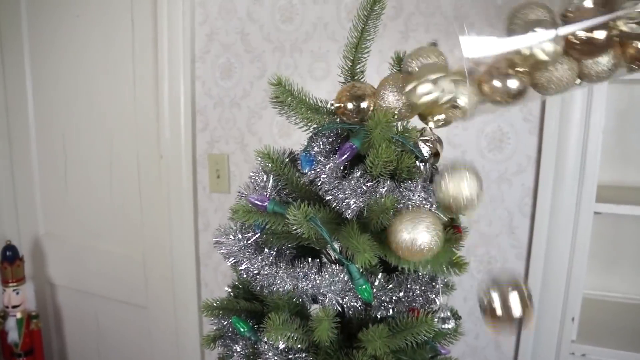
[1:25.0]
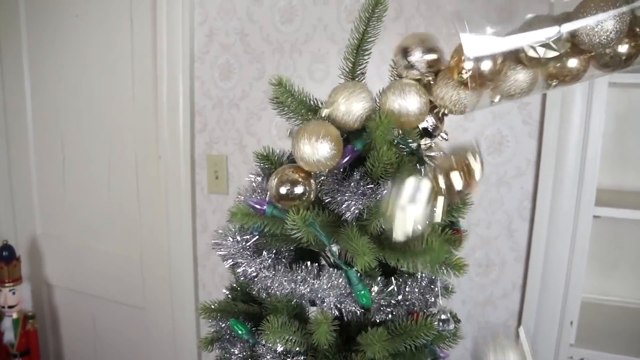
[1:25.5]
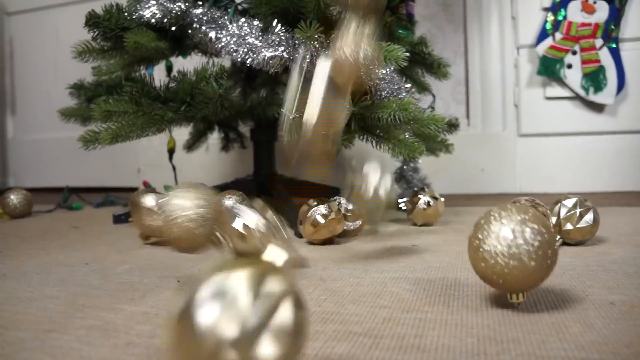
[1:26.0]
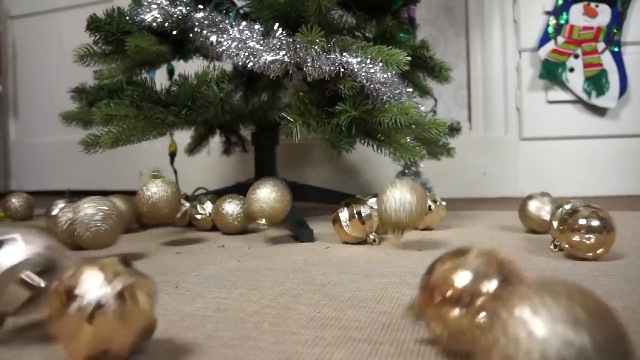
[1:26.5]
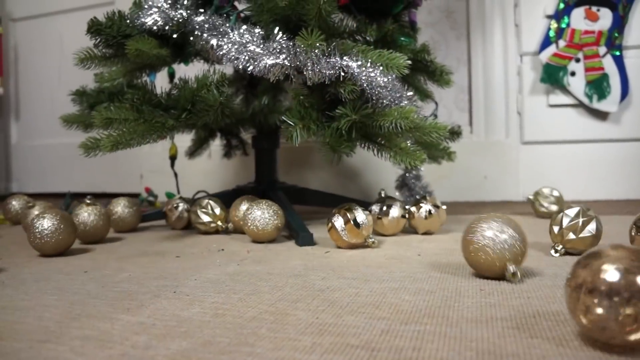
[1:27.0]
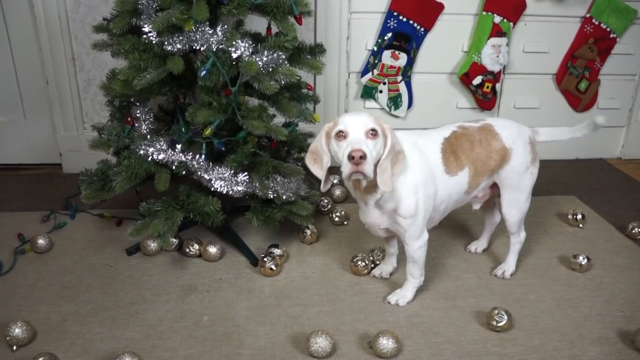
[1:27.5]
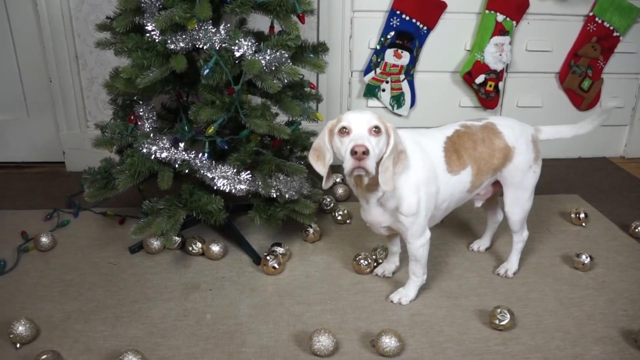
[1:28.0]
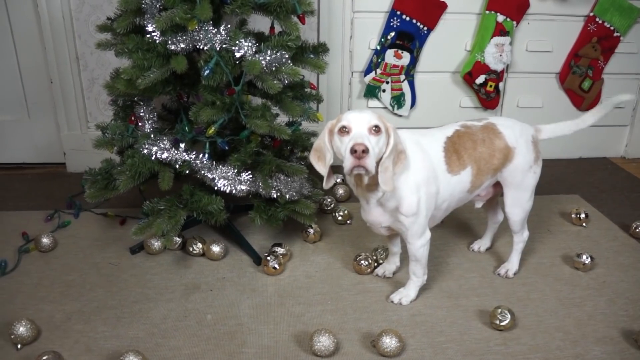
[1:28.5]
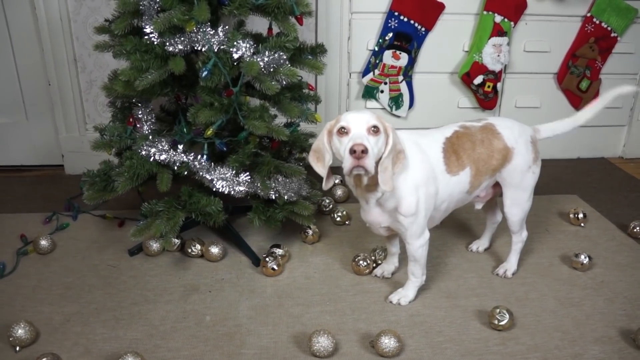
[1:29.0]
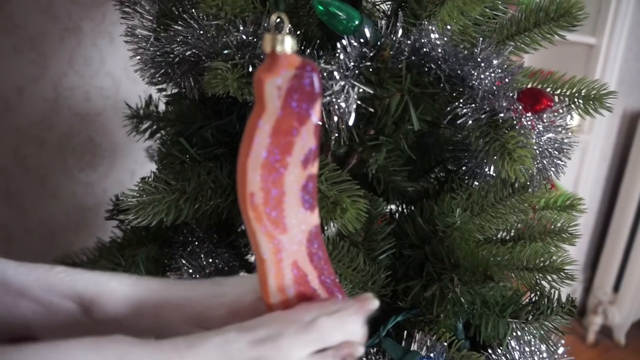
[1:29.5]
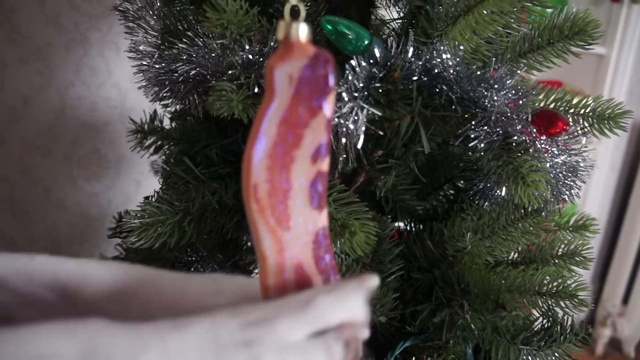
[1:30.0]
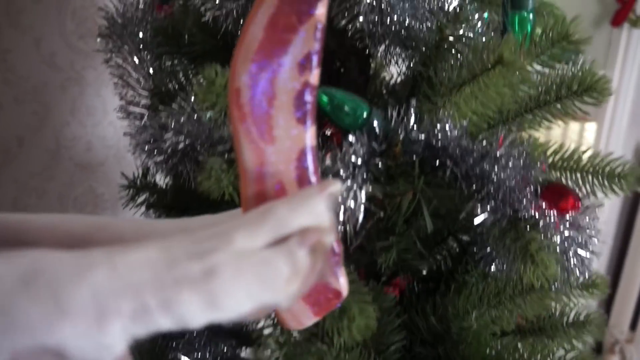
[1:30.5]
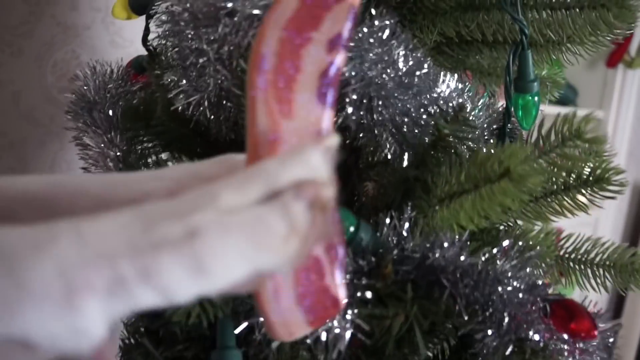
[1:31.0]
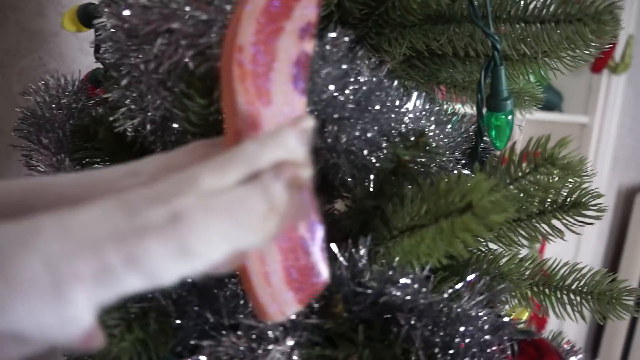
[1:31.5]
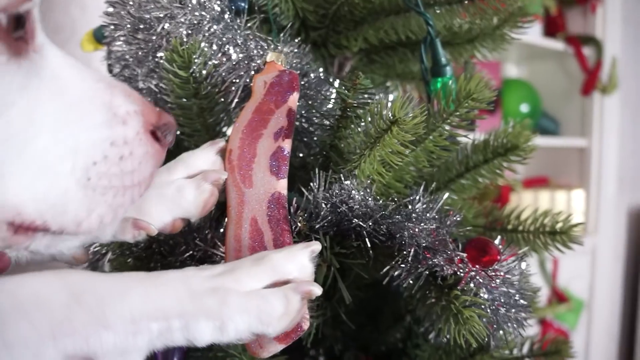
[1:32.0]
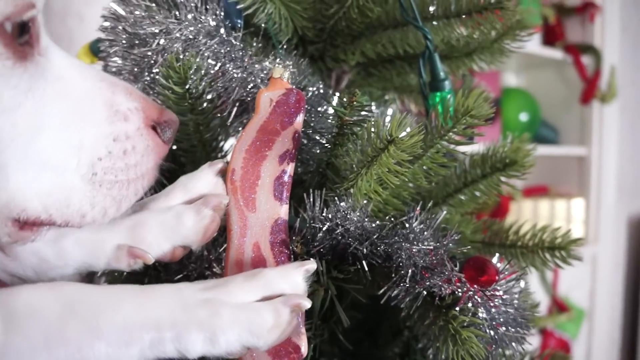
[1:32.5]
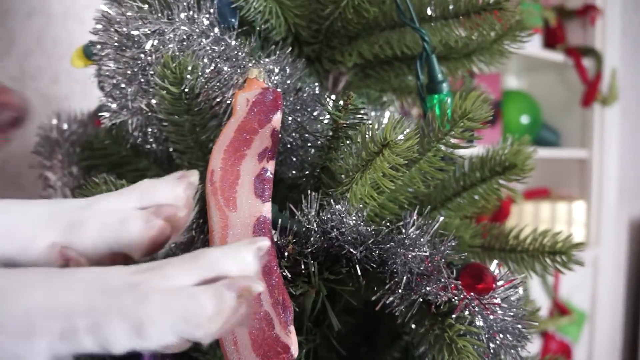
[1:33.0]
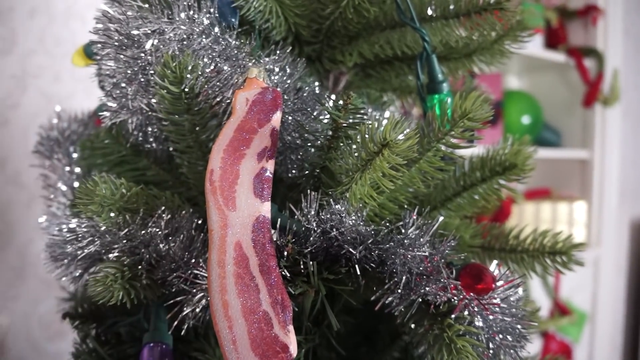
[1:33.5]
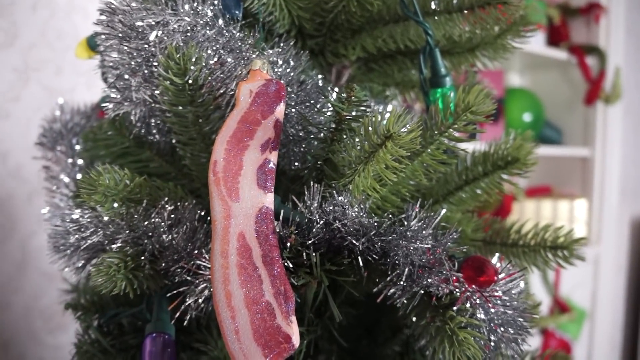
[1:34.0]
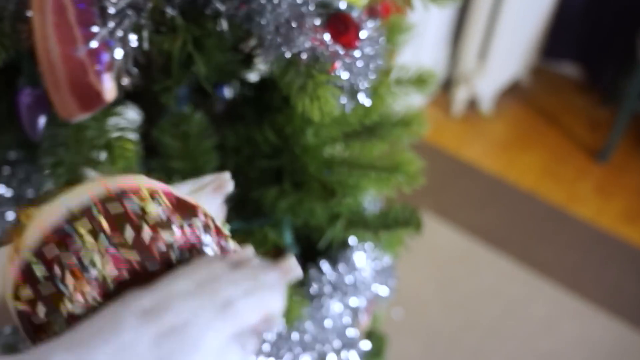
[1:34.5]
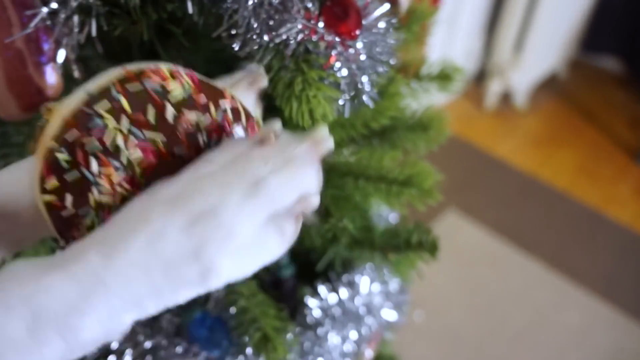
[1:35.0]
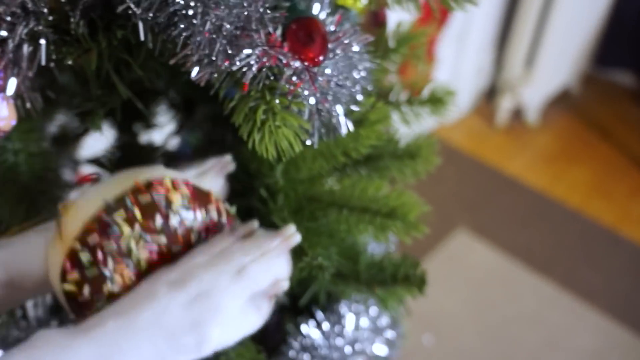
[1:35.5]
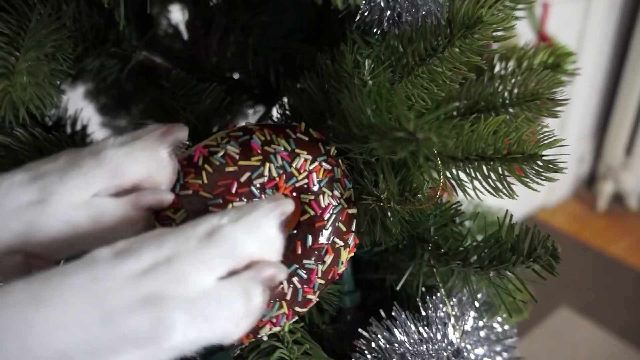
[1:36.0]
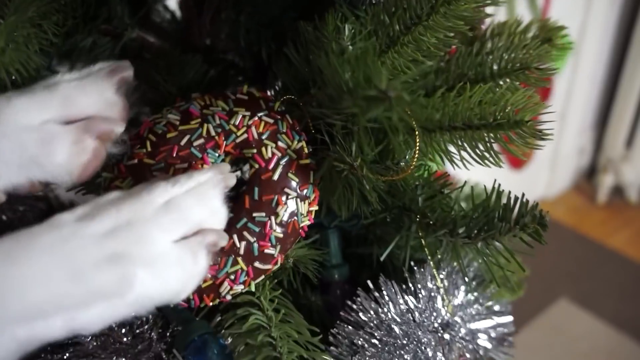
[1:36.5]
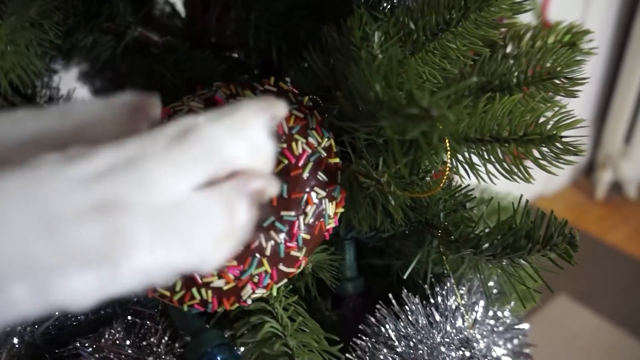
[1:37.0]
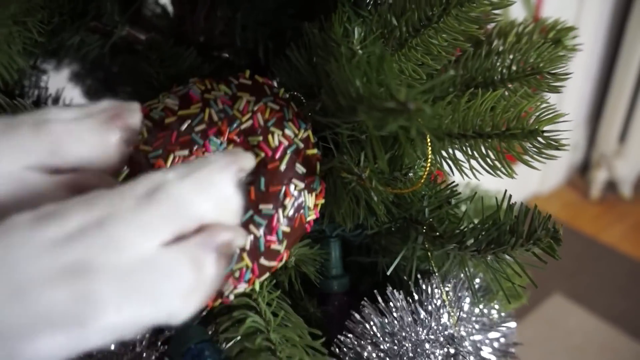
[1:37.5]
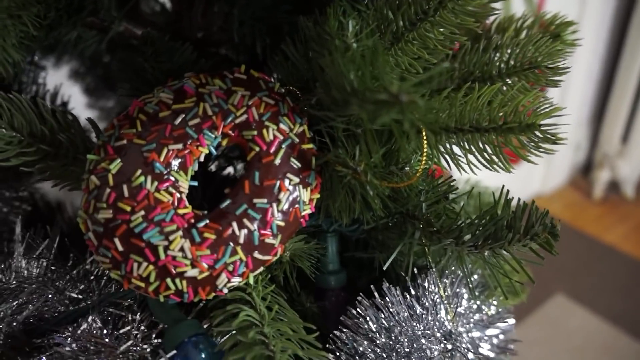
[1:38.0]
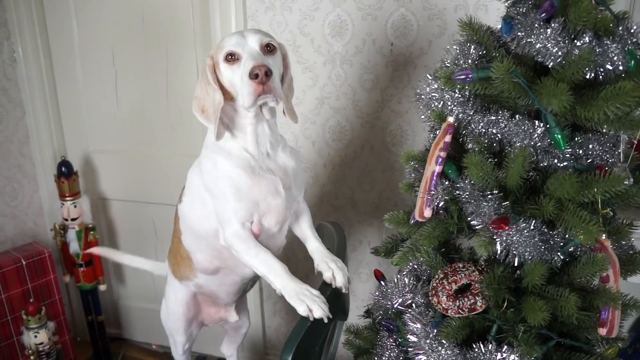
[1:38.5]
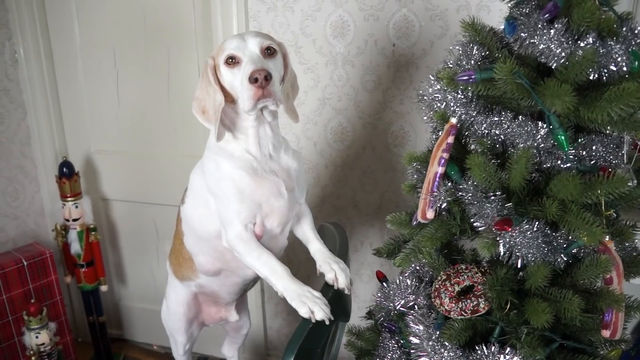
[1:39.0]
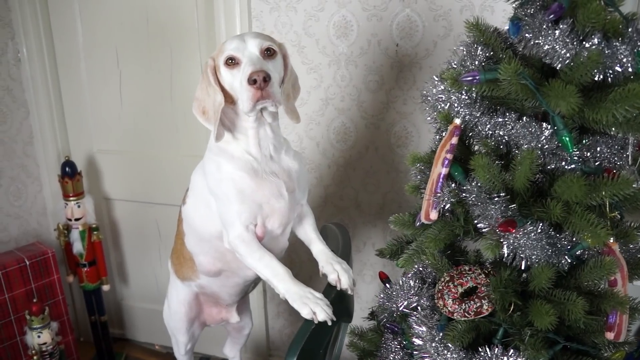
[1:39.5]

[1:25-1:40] The dog pours the gold Christmas baubles over the tree and all over the floor. It hangs various ornaments on the tree, including a slice of bacon ornament and a chocolate donut ornament with multicolored sprinkles. The white dog looks like it is wagging its tail while sitting on a stand and putting the ornaments onto the tree with both paws. Then it sits on the chair, wagging its tail and making a mess, with gold baubles all over the floor.